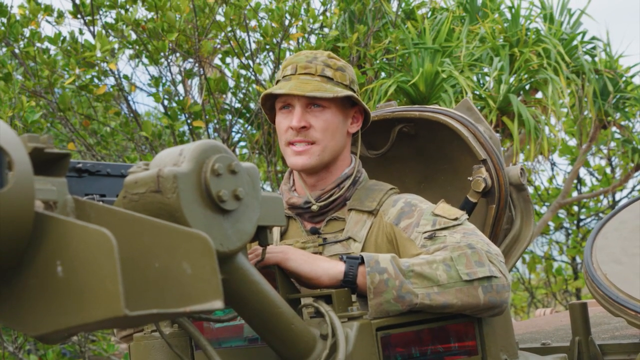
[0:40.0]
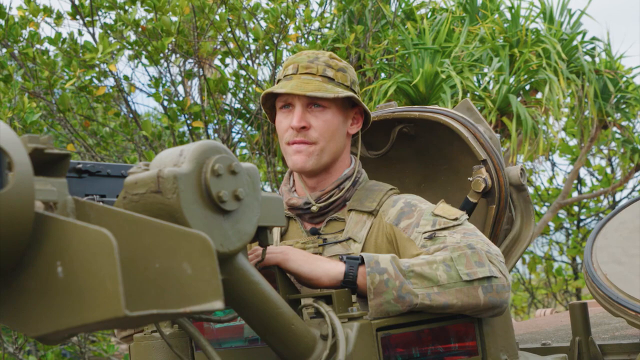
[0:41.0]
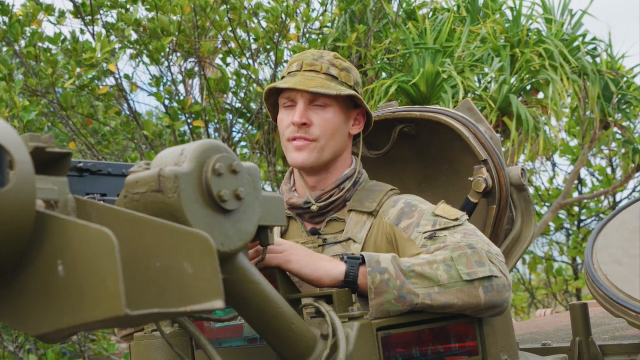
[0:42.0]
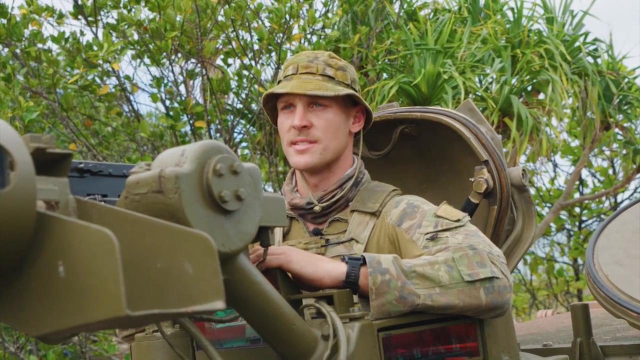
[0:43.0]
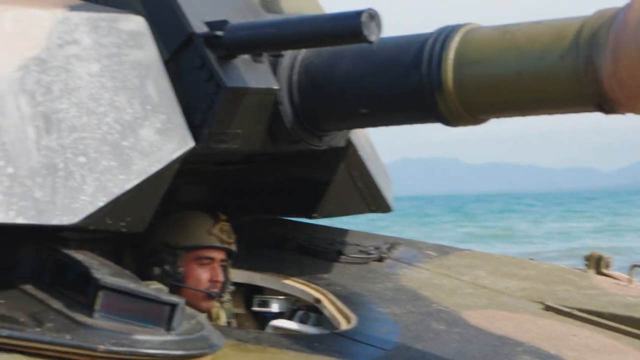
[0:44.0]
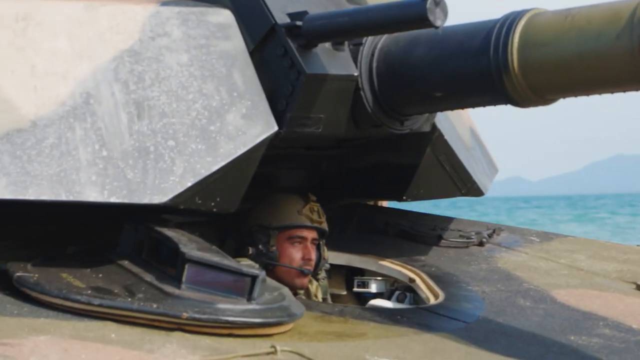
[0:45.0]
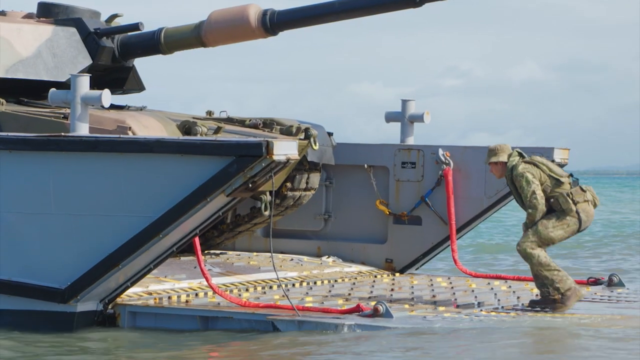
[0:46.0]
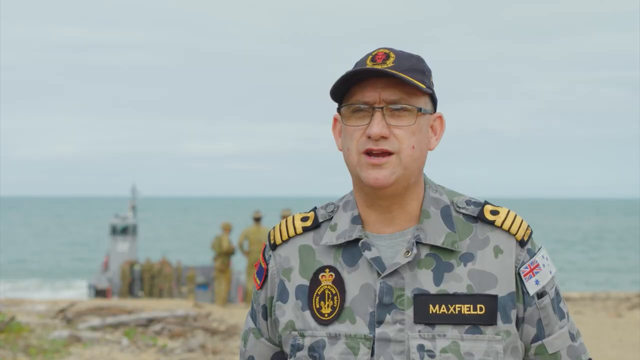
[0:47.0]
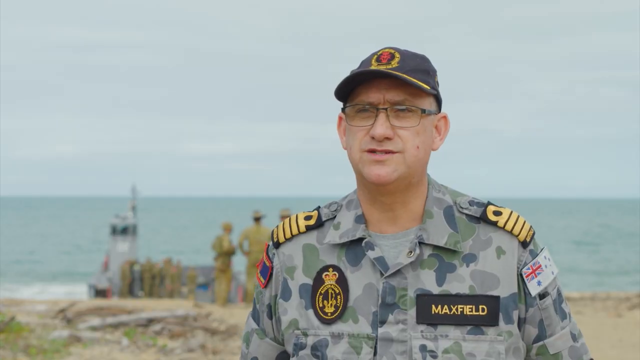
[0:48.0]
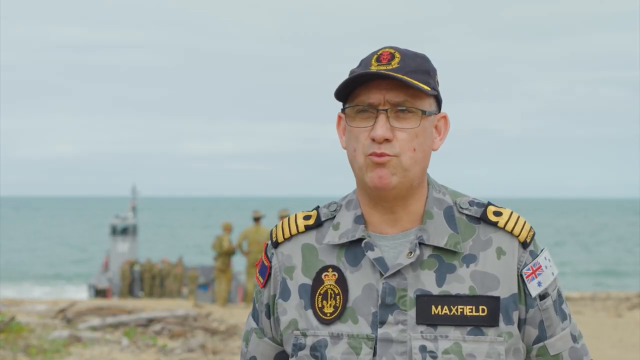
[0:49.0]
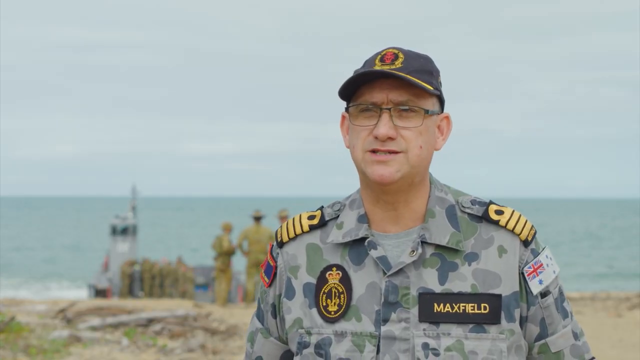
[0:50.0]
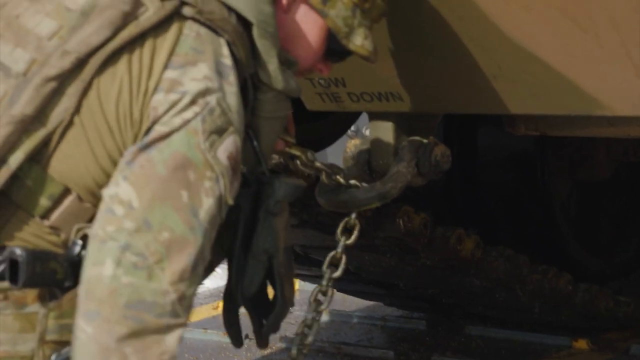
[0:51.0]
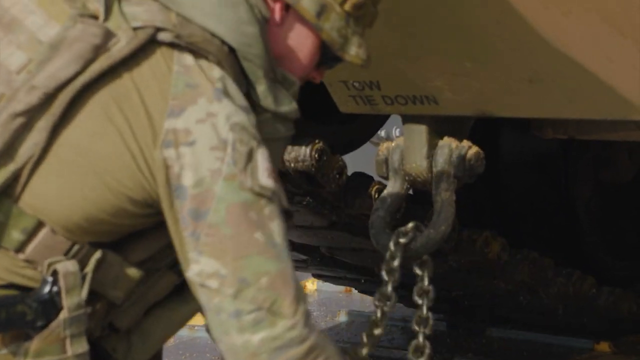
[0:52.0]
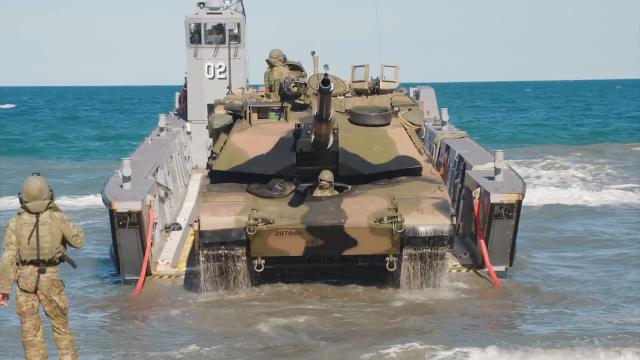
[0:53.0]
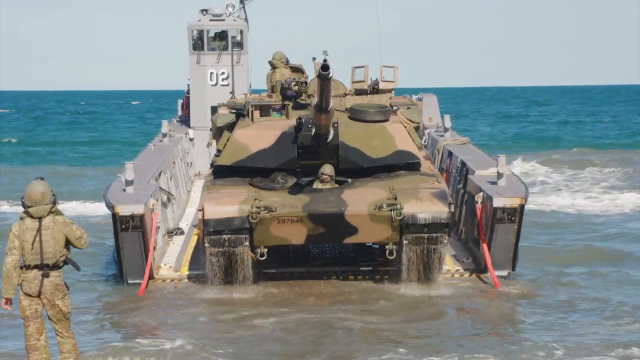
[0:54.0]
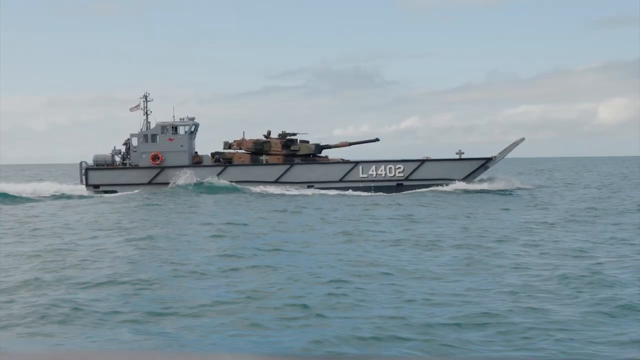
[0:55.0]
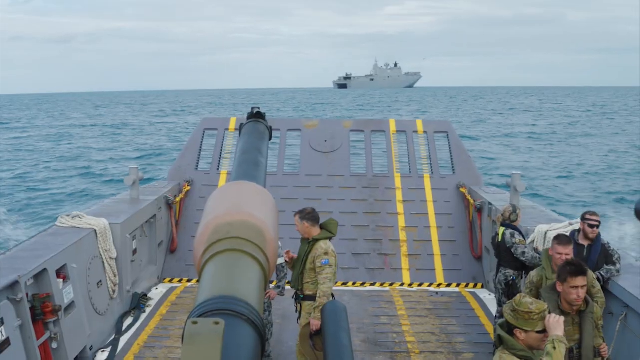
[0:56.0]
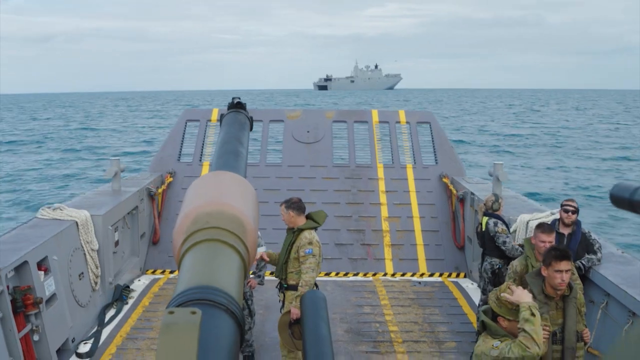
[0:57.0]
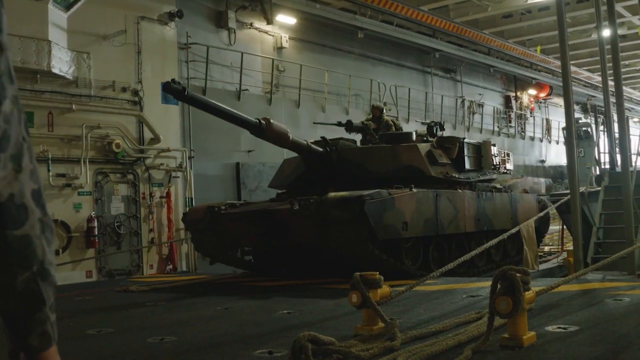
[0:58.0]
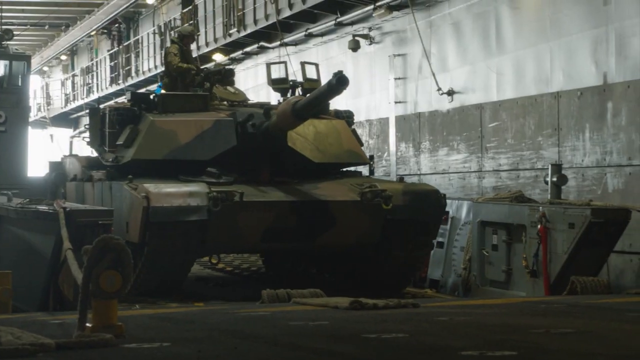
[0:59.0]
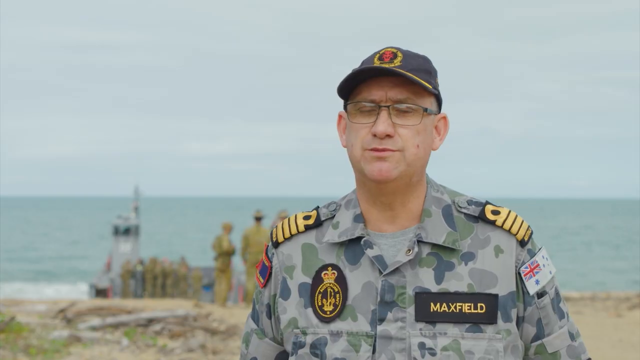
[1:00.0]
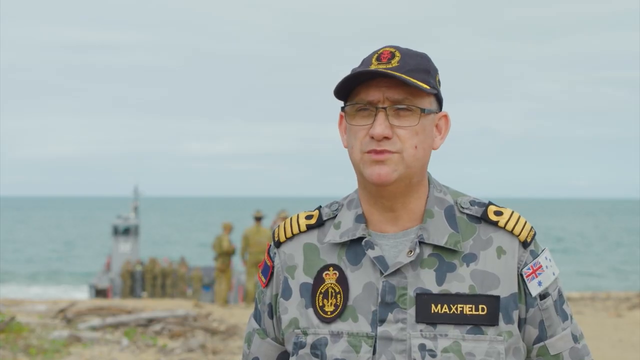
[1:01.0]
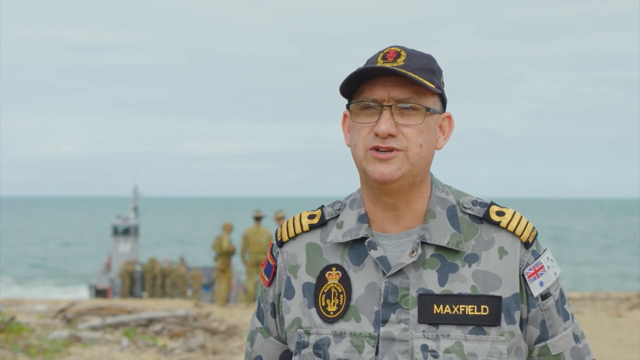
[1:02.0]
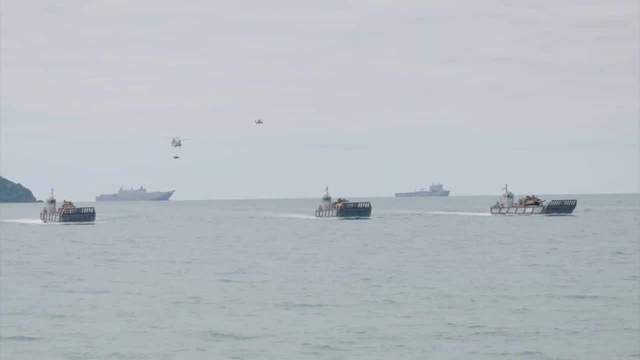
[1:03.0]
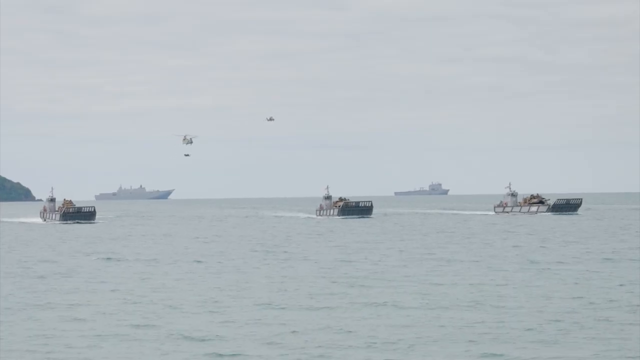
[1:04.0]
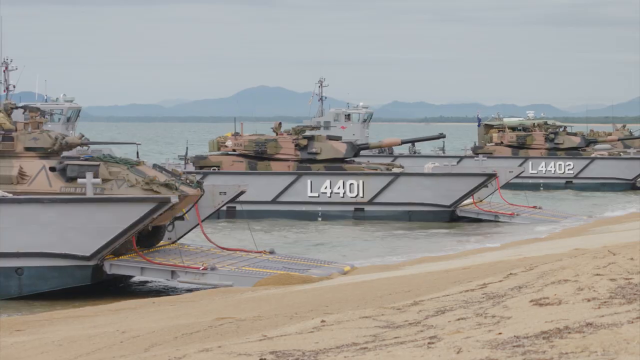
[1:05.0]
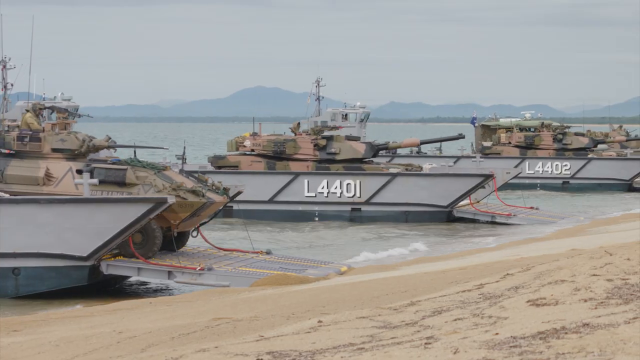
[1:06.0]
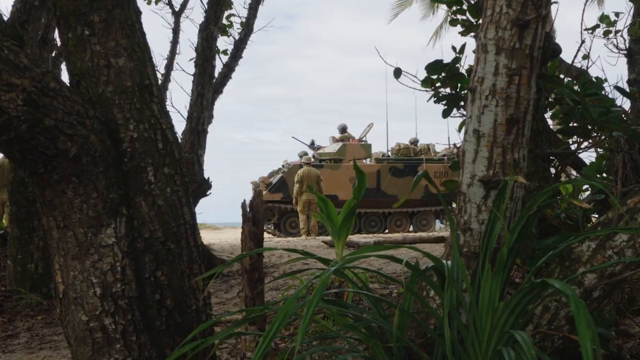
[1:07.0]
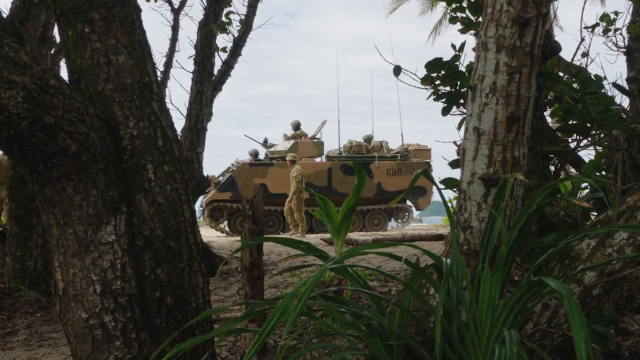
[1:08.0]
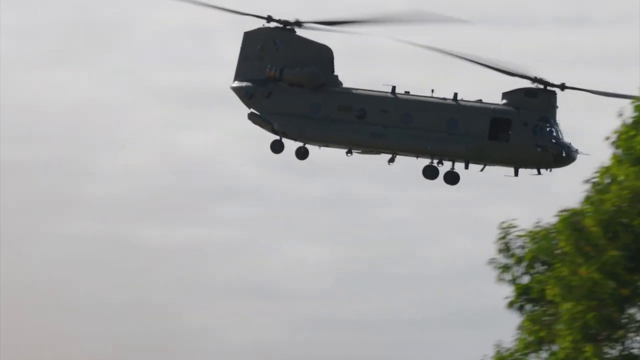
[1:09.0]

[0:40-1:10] An army officer in a tank holds an assault weapon. He wears a green army uniform with an army vest and a bucket hat, has a watch on his left hand, and is speaking. Another officer in the tank seems to be guiding the weapon above him. The tank then gets back onto the ship, and an officer bends down to look at something. An officer with lapels on his shoulders, a logo on the right side of his chest, the word Maxfield on the left side of his chest, and a cap is shown. An army officer secures the tank by putting a silver chain through the tow bar on the tank. The tank comes from the water onto the ship, and the ship sails through the ocean with the tank behind it, multiple army officers aboard. What looks like the dock appears, with tankers driving off the ship onto land. The video returns to officer Maxfield, then shows multiple ships with tankers driving off them onto the sand, and a helicopter.